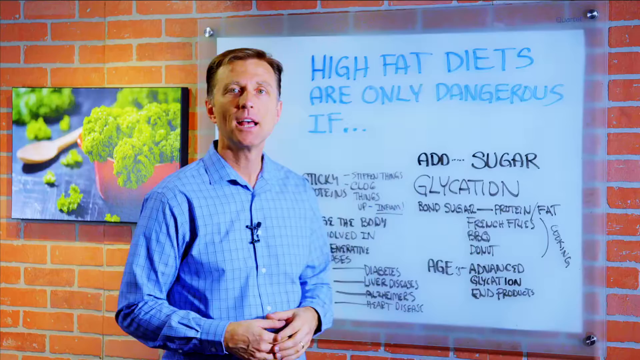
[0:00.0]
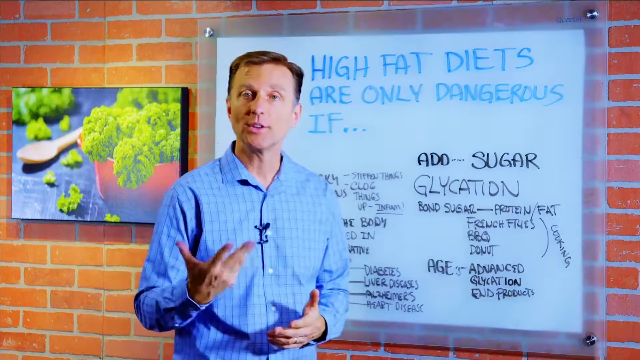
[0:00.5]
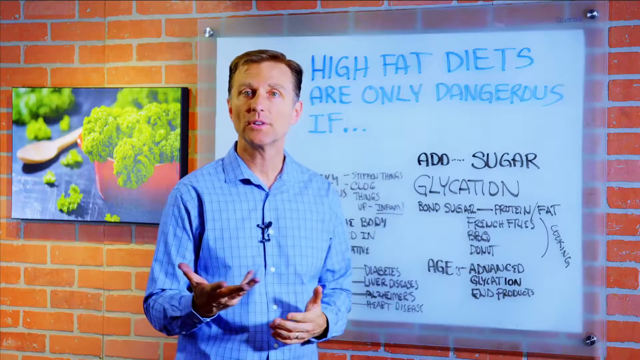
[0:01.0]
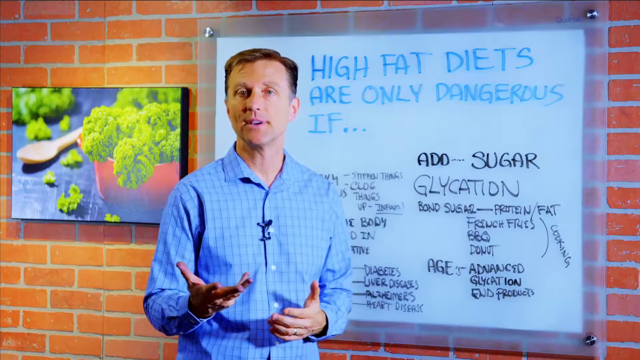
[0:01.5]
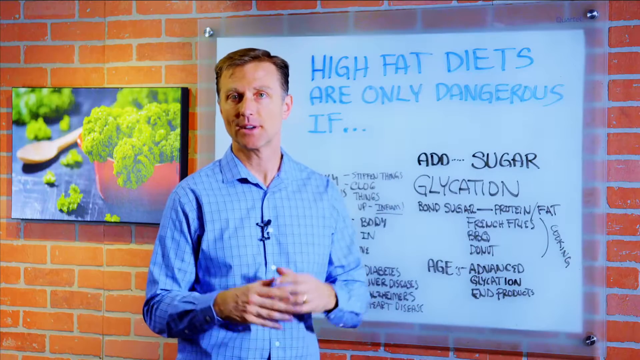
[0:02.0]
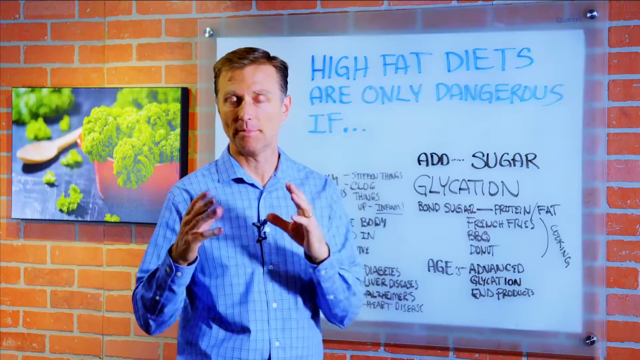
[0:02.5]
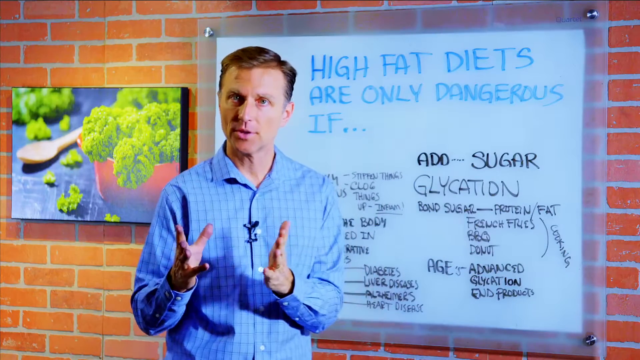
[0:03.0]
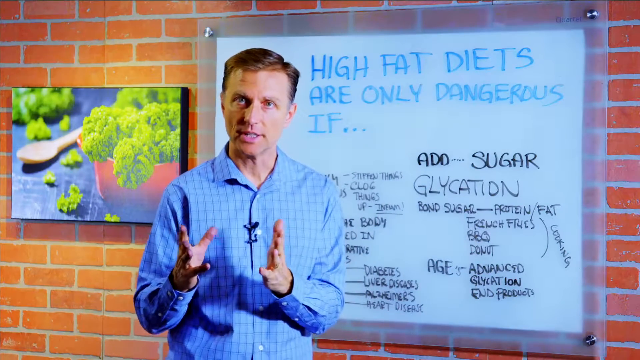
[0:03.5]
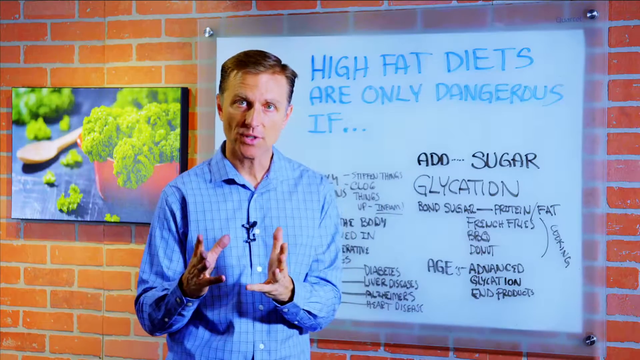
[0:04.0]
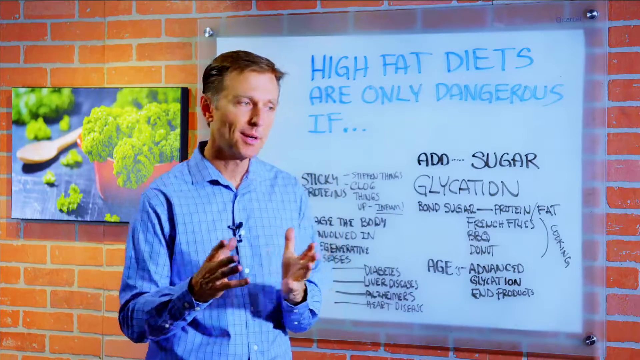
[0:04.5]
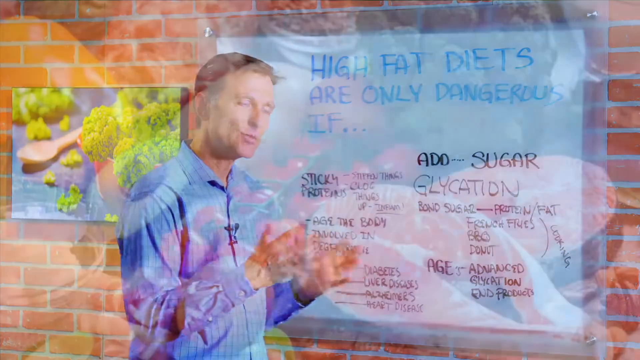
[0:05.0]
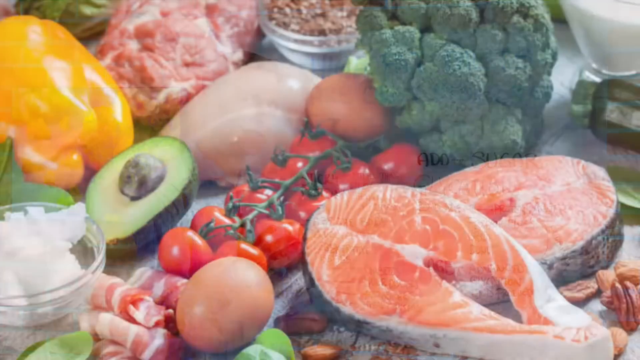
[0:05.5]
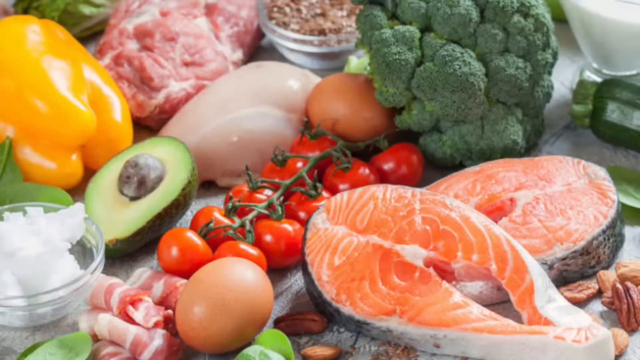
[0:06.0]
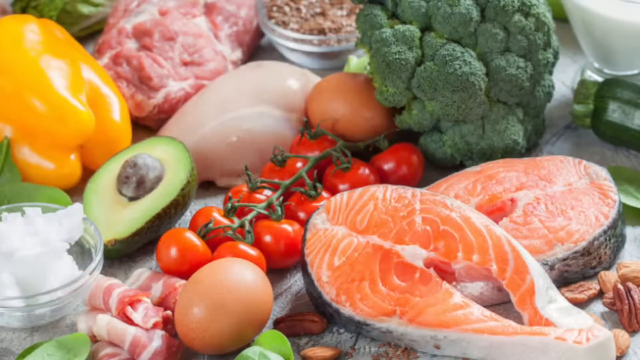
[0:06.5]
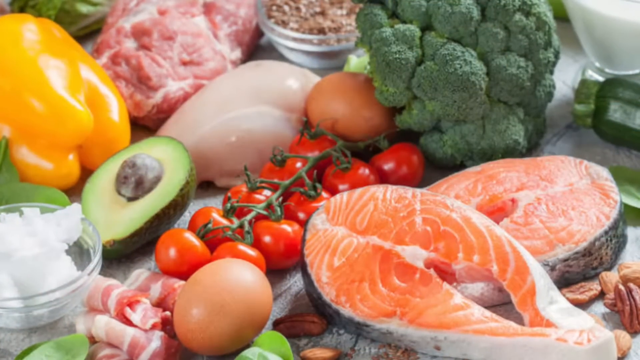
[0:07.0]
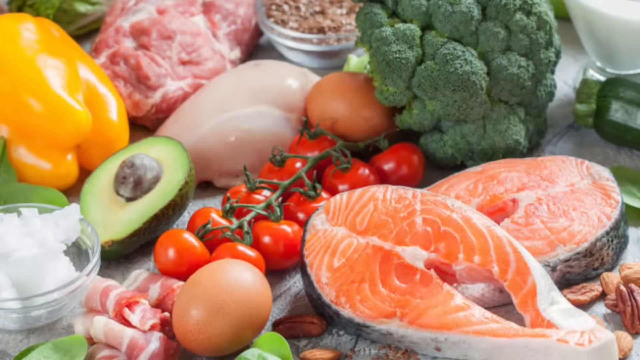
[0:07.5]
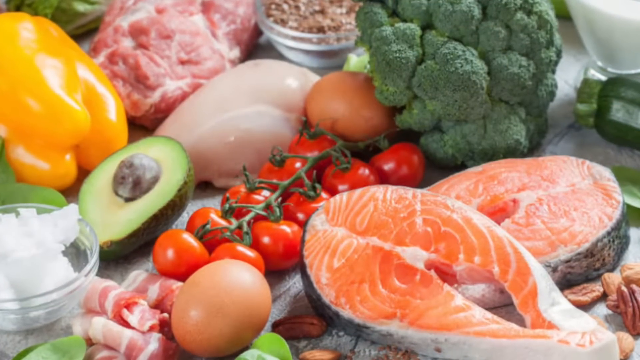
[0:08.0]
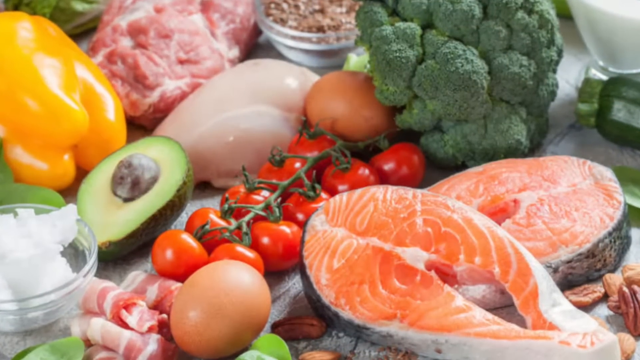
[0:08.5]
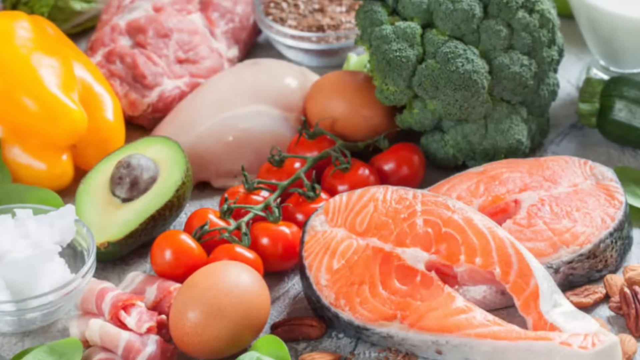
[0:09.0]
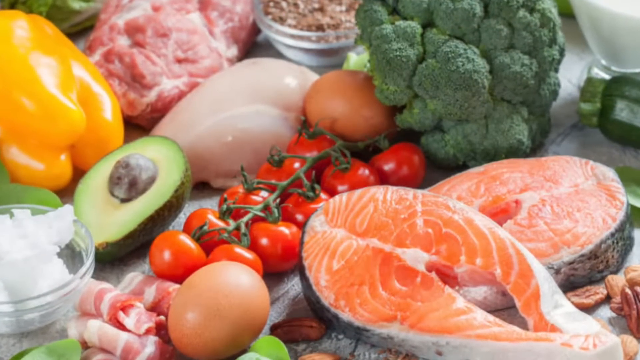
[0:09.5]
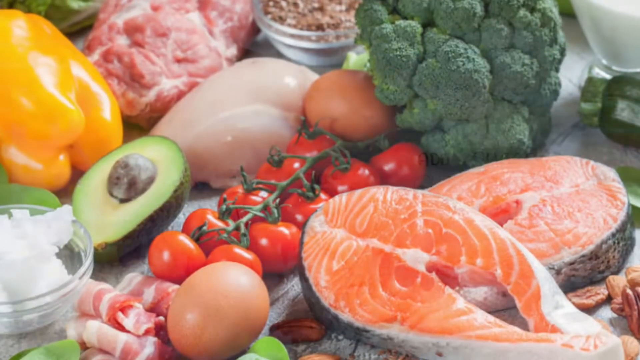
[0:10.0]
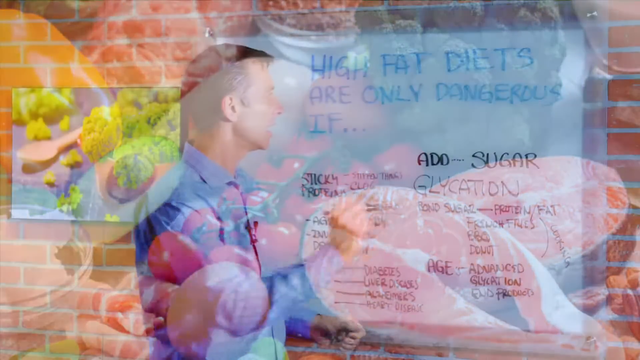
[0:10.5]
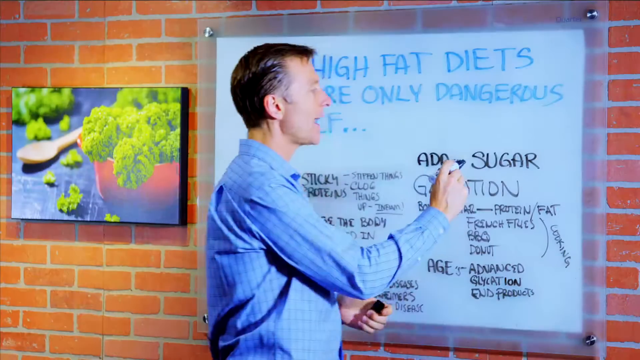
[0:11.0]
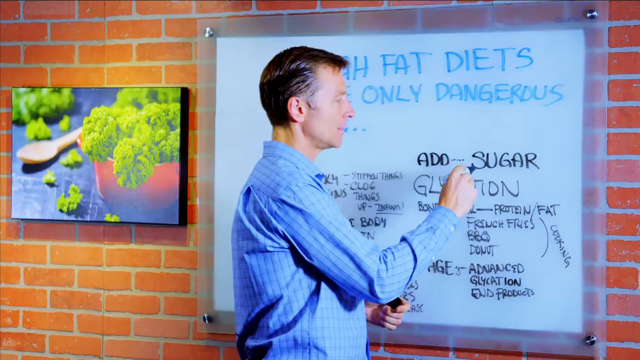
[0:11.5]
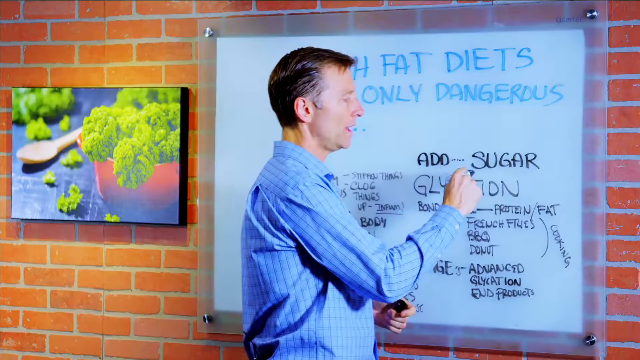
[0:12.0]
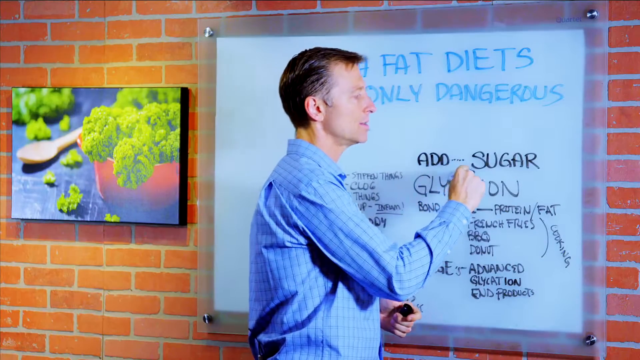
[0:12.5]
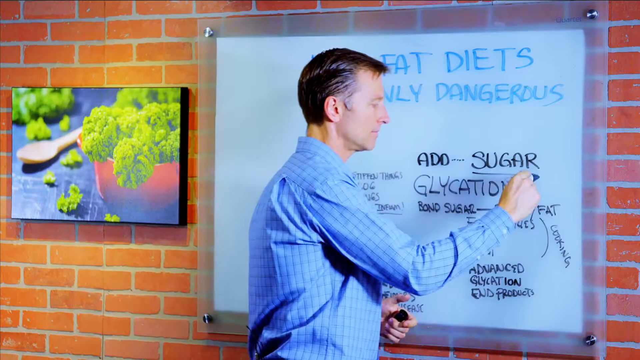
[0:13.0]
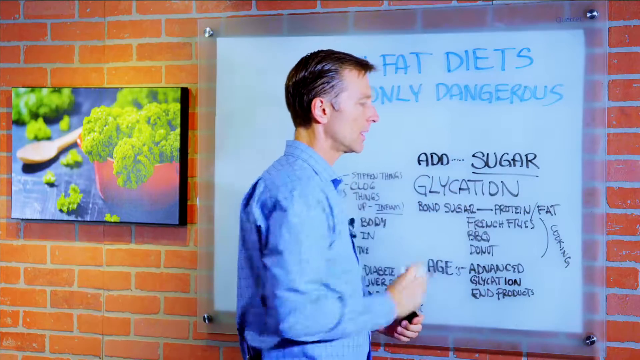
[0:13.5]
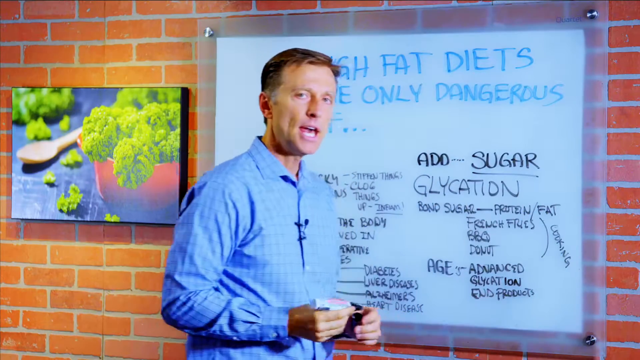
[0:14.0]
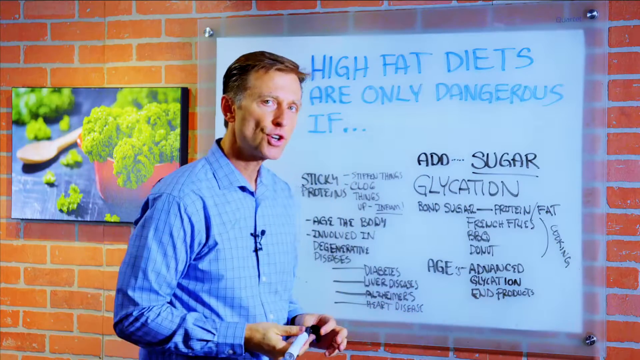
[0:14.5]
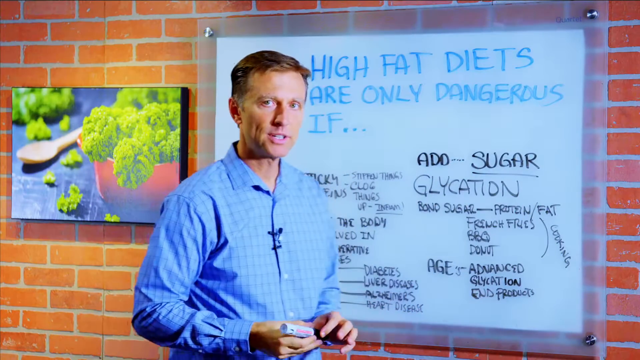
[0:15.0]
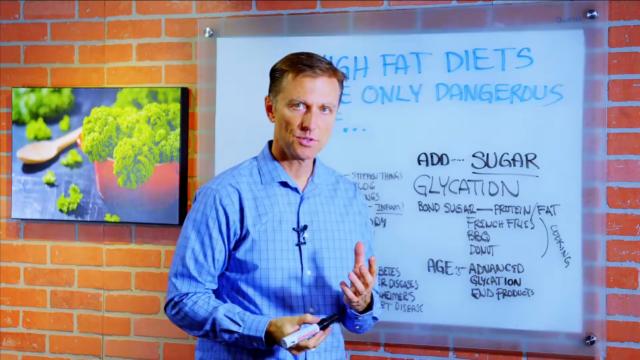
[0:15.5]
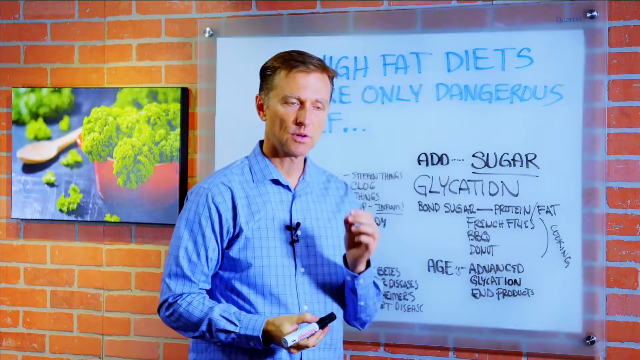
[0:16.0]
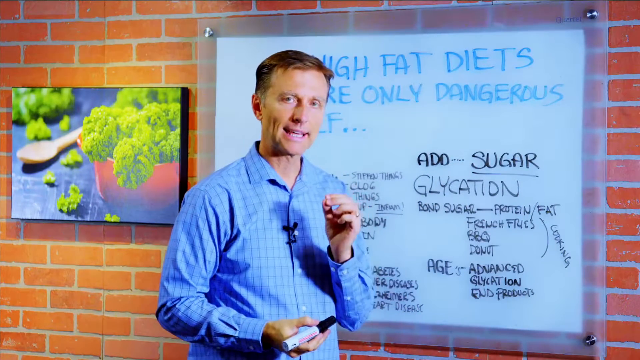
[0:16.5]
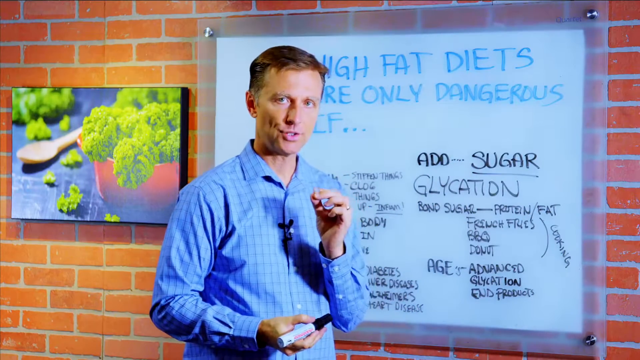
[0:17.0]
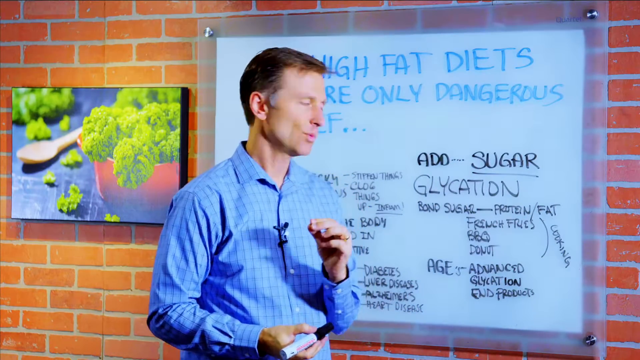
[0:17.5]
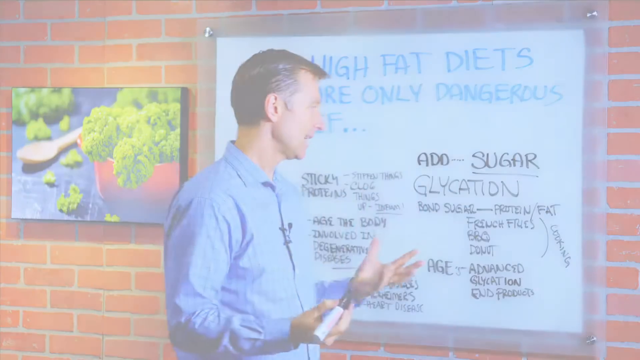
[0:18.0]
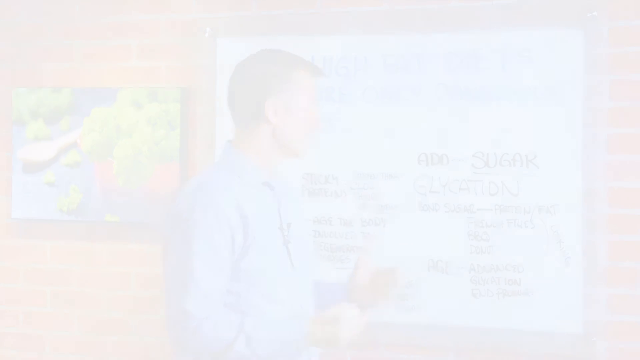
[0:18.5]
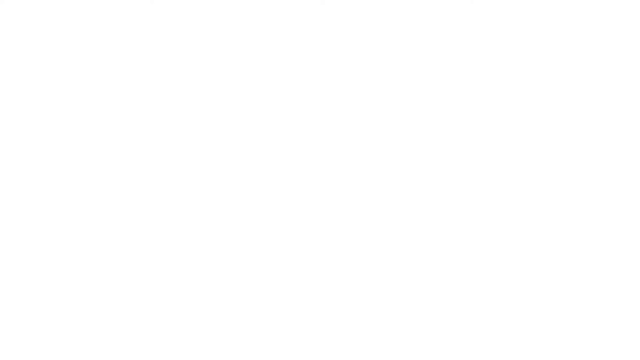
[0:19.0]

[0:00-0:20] Fish, tomatoes, potatoes and many other foods are shown together, along with cashews. A lot of information appears, but it is unclear and hard to read; it seems to say that high fat diets are only dangerous if too much sugar is added.